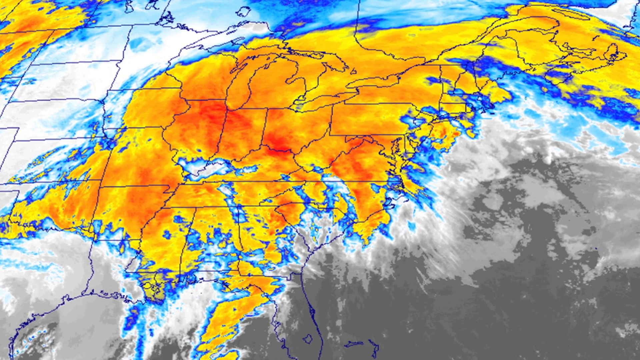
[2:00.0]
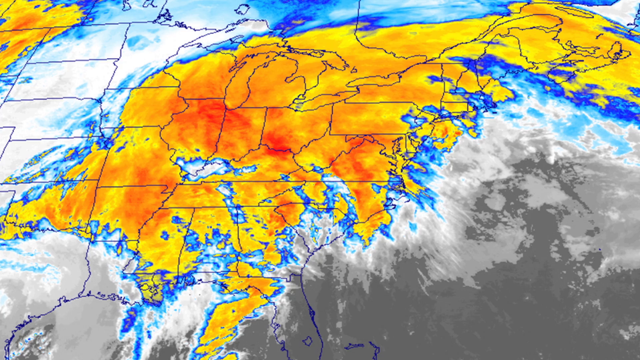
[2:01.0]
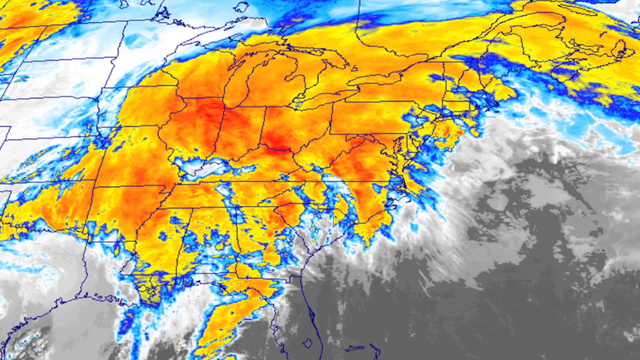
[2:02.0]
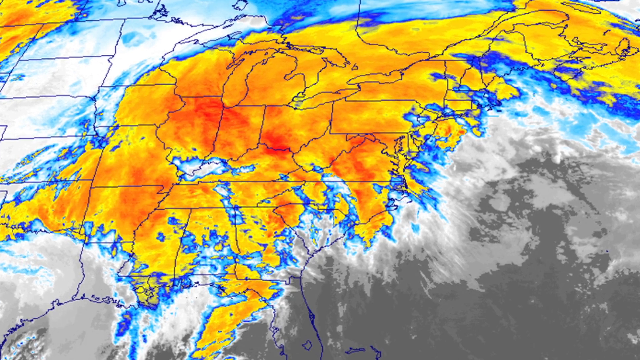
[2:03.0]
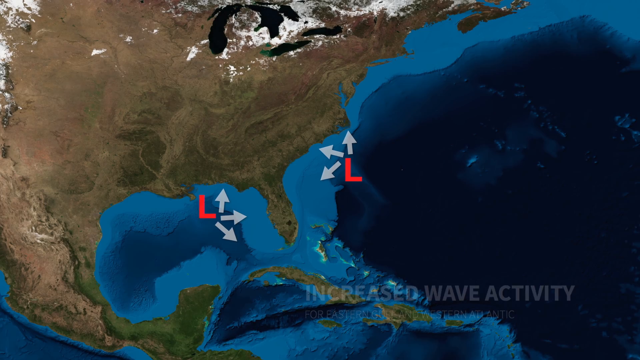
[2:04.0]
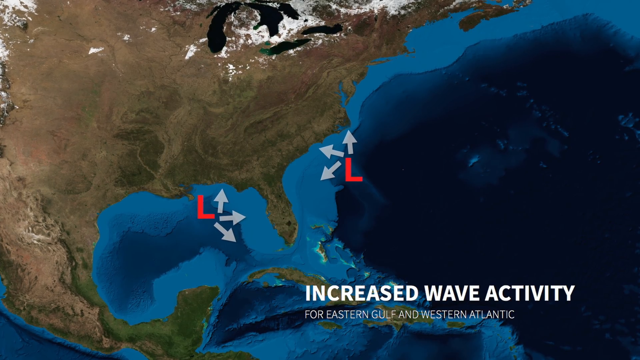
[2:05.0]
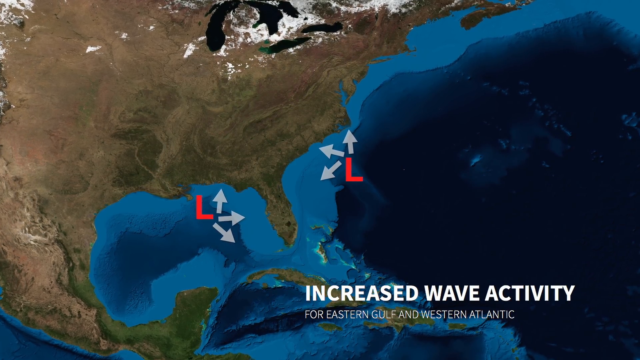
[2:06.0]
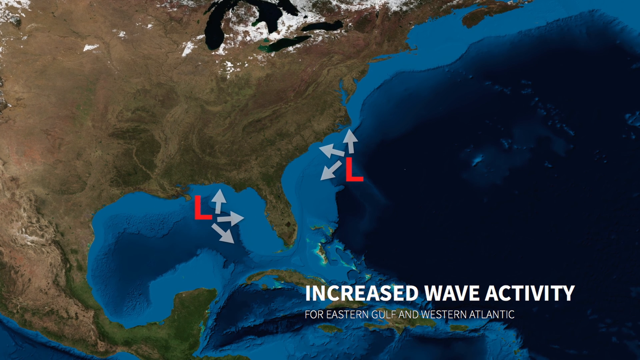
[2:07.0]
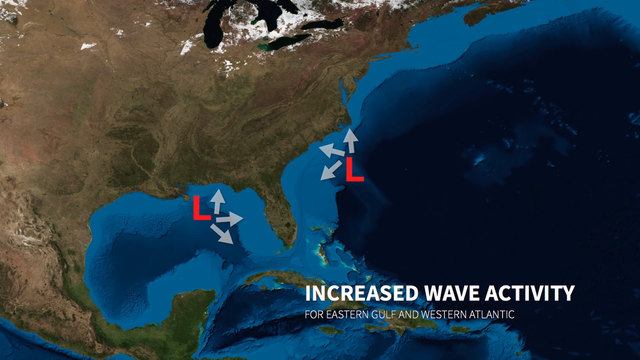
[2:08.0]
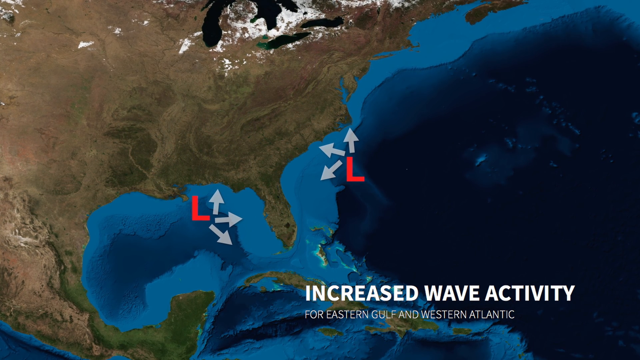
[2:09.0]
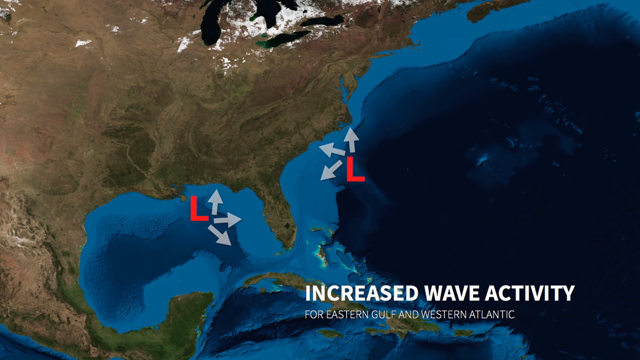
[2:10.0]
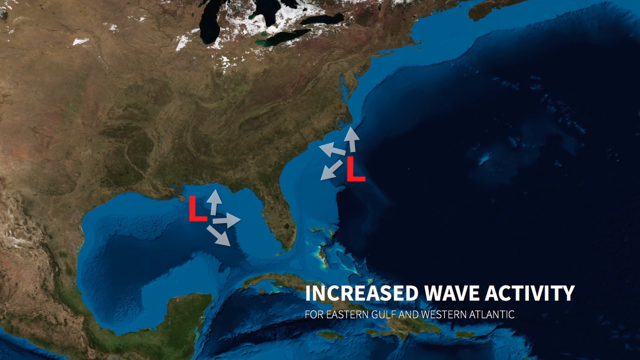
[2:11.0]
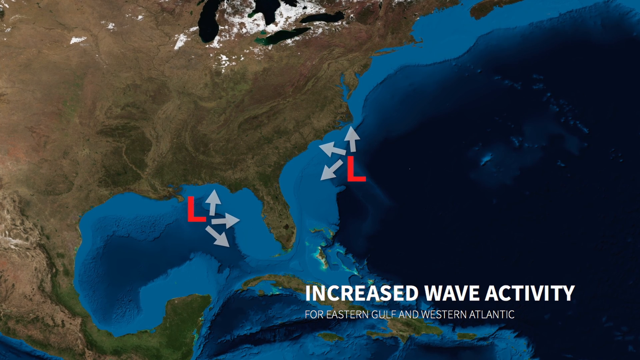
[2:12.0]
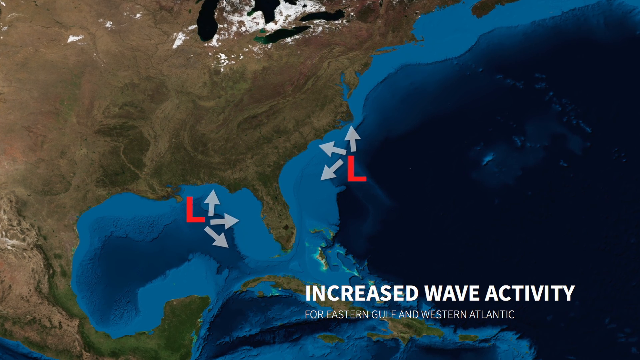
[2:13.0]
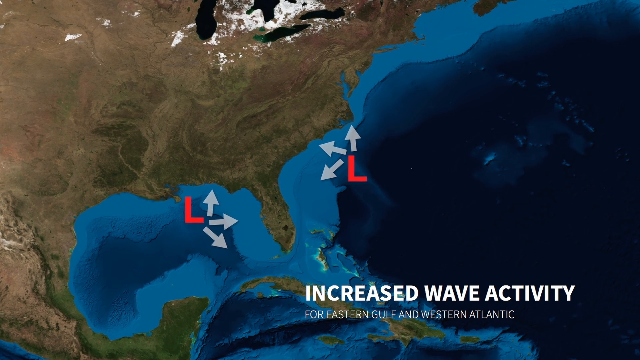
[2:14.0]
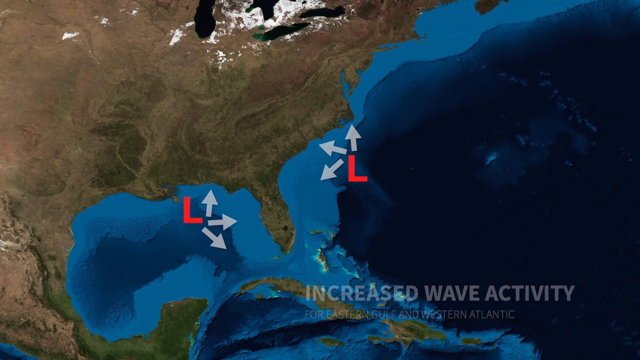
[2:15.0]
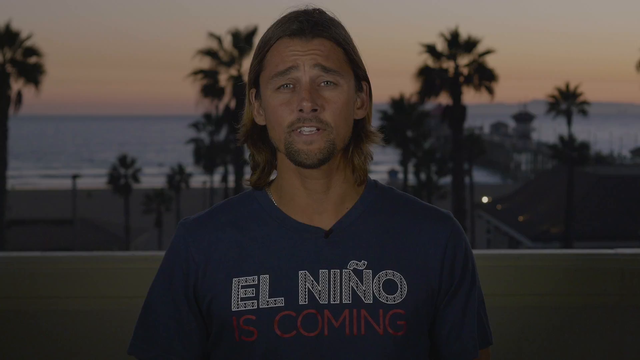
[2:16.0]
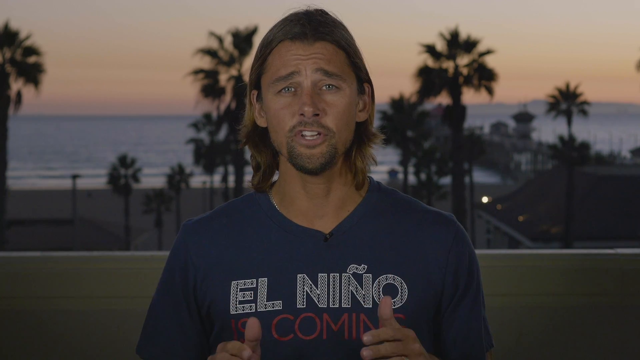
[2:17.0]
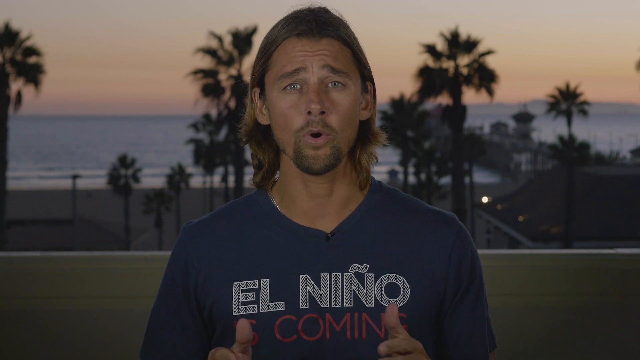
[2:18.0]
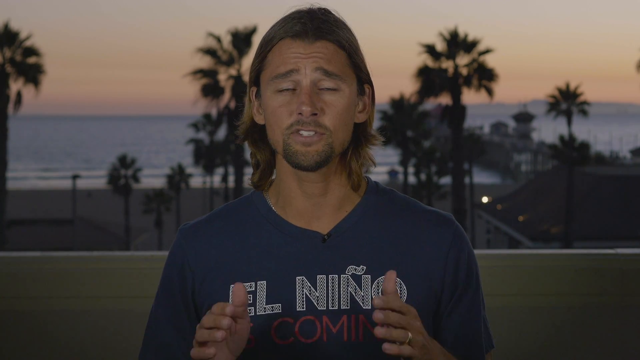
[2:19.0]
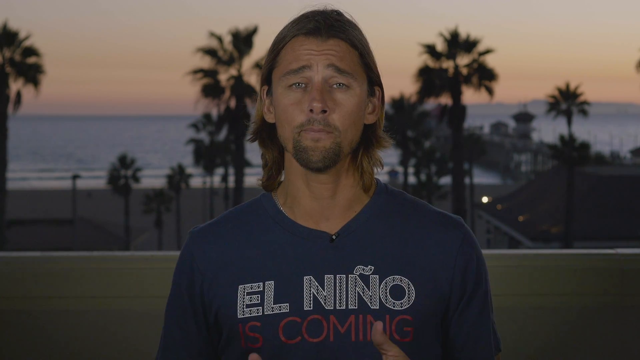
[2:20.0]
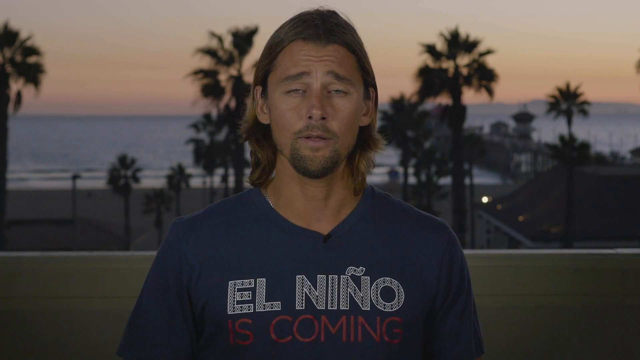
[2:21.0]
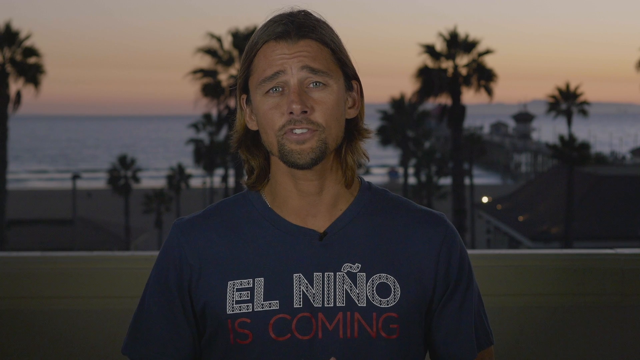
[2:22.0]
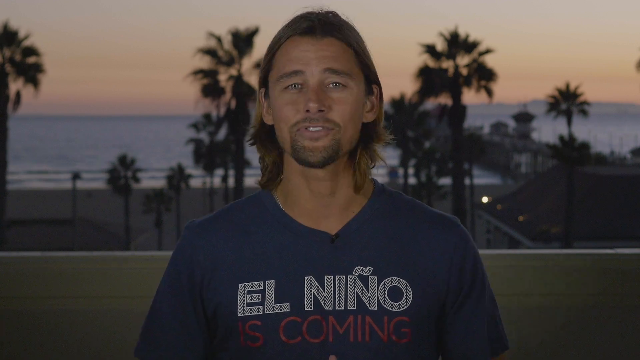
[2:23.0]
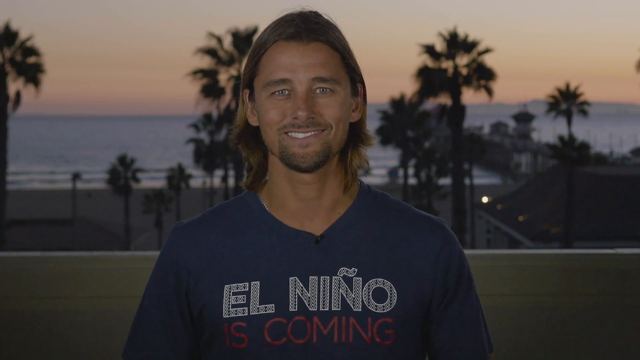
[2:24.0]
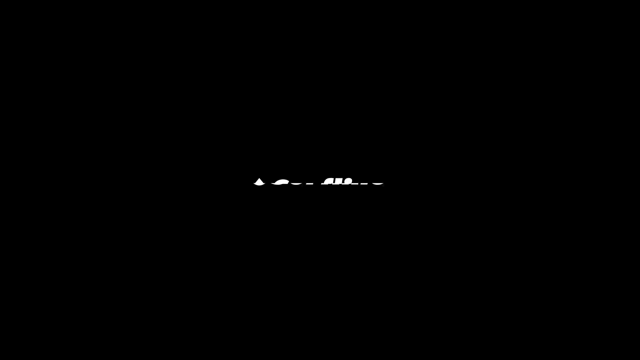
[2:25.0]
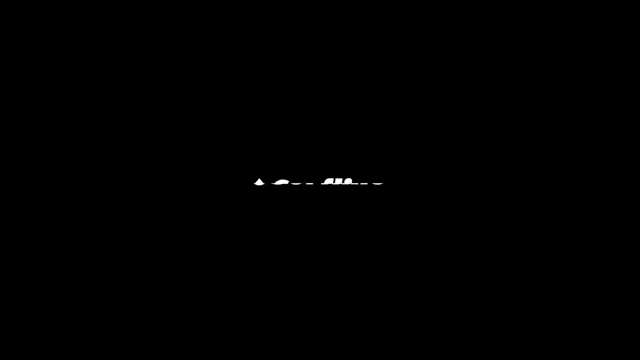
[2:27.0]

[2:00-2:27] The view of the East Coast of the United States continues, followed by a much clearer picture that is less a radar image and more a sky view of the same area, with Florida at the bottom and Massachusetts and Georgia visible. At the bottom right, text reads "increased wave activity", and below it "for Eastern Gulf and Western Atlantic". Two sets of arrows point up, left and down, one set on the left side of Florida and one on the right side, apparently indicating increased wave activity over time. A Surfline logo then appears, possibly the organization the man is part of.